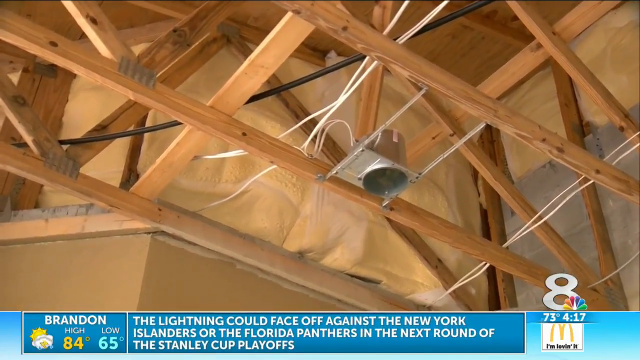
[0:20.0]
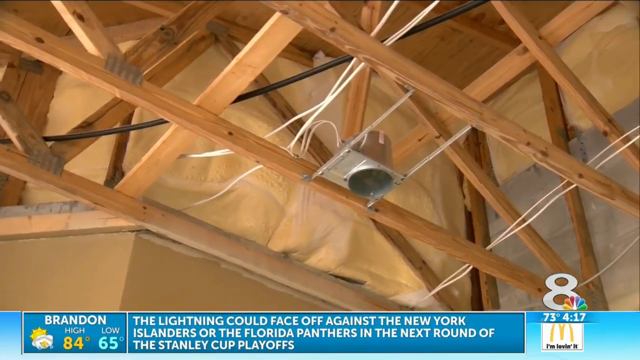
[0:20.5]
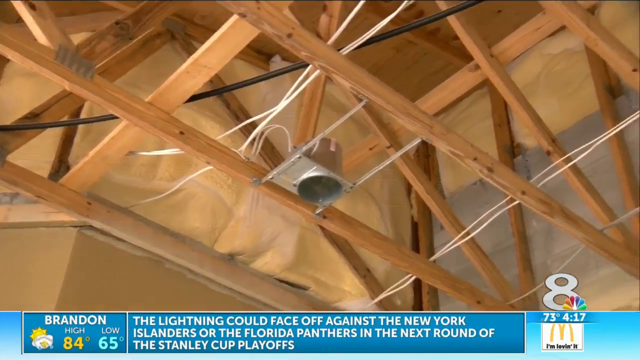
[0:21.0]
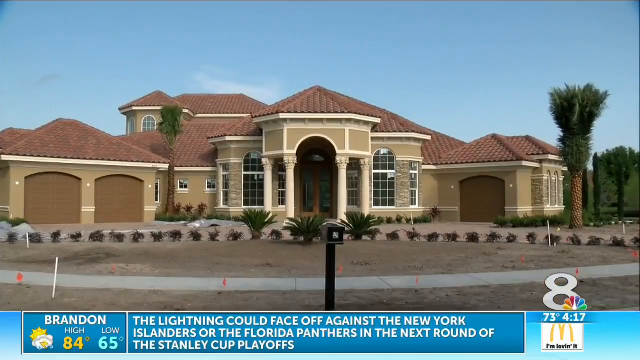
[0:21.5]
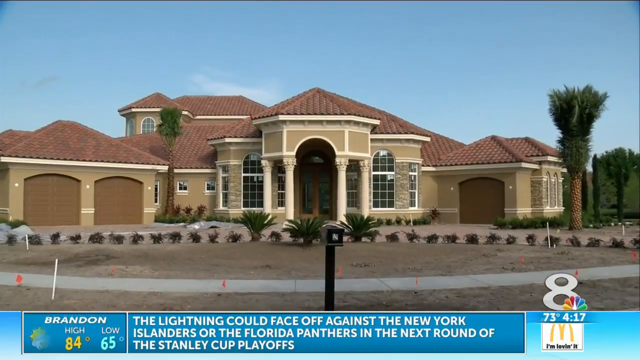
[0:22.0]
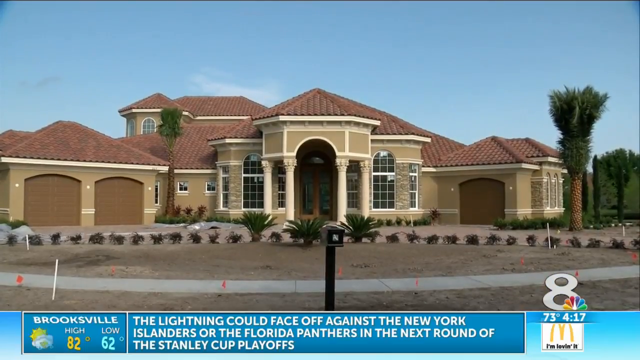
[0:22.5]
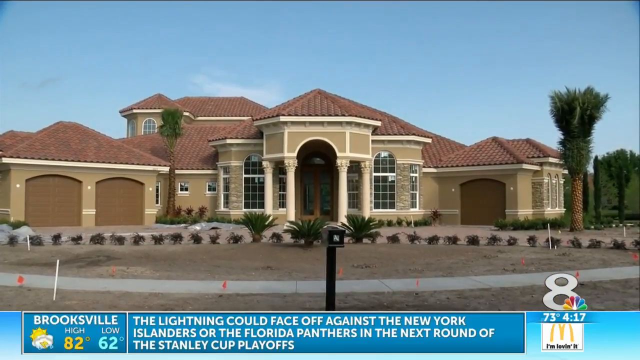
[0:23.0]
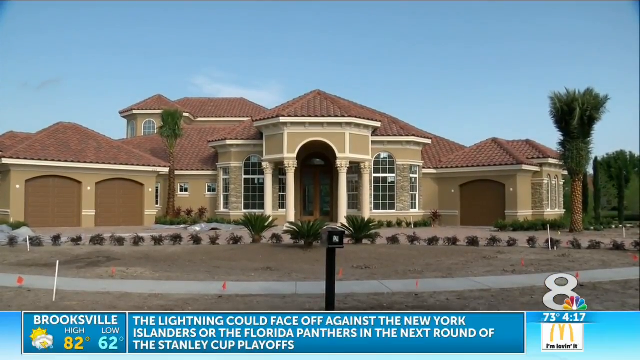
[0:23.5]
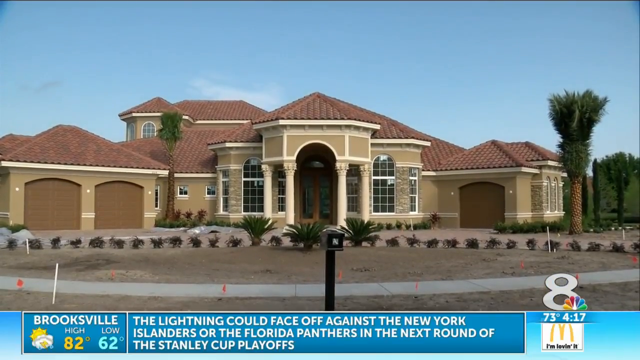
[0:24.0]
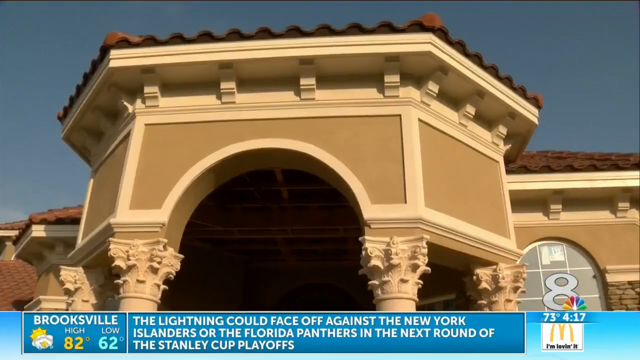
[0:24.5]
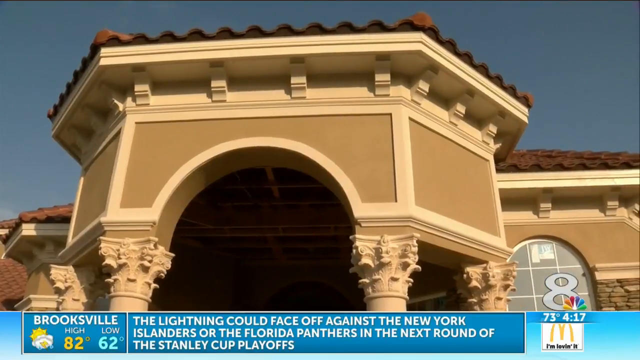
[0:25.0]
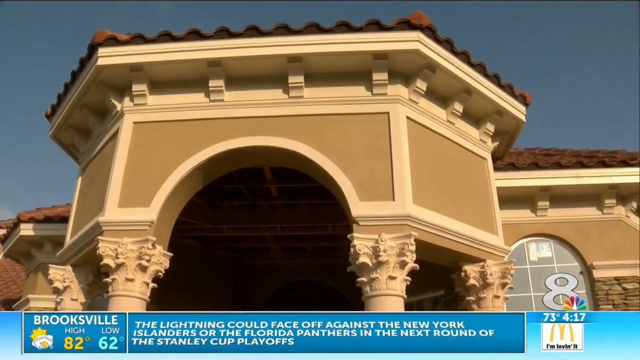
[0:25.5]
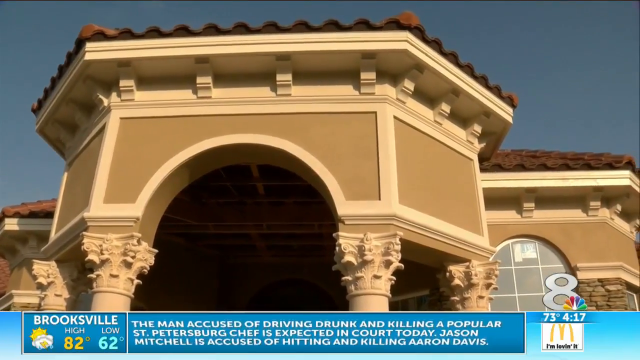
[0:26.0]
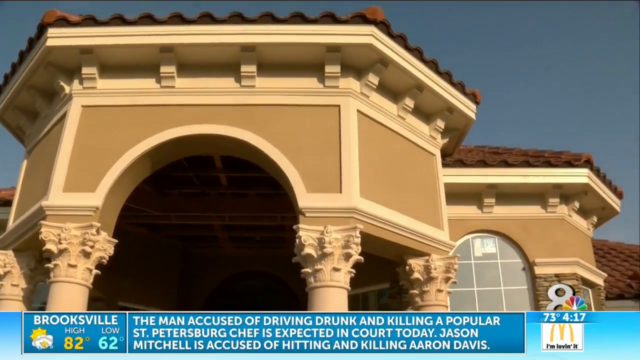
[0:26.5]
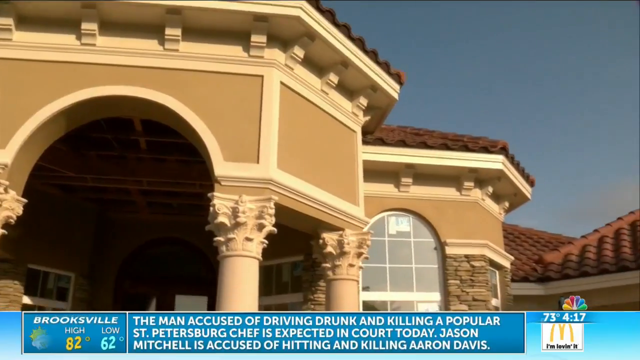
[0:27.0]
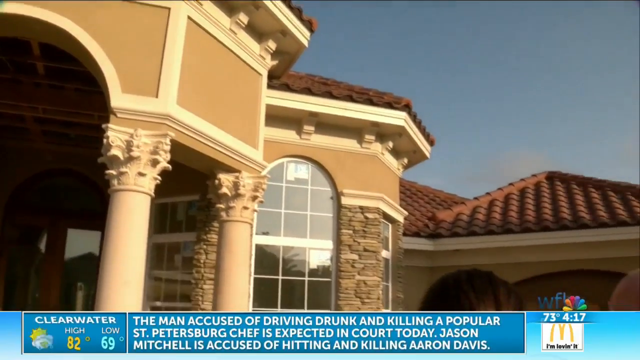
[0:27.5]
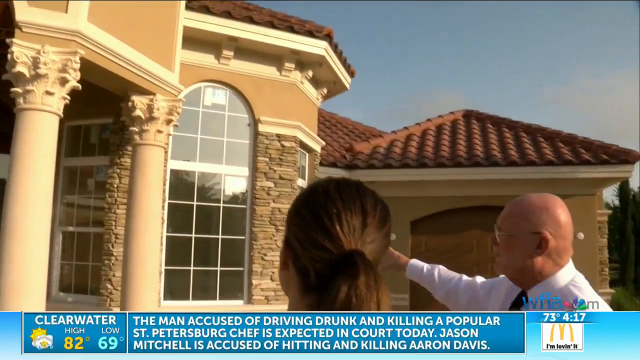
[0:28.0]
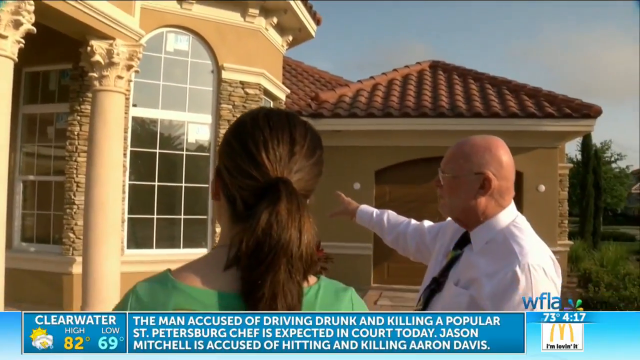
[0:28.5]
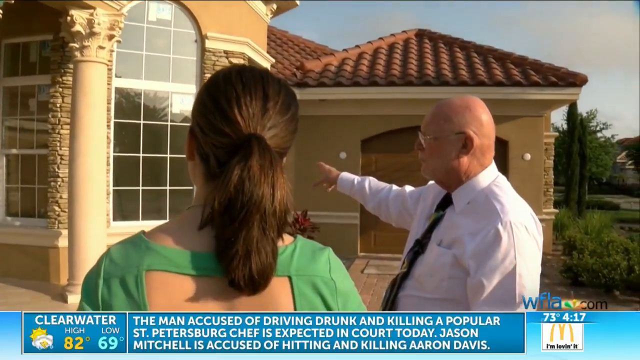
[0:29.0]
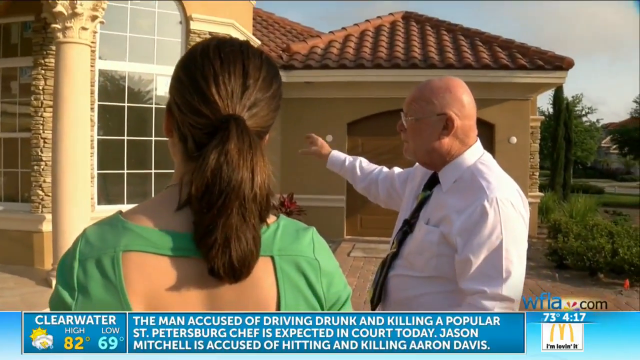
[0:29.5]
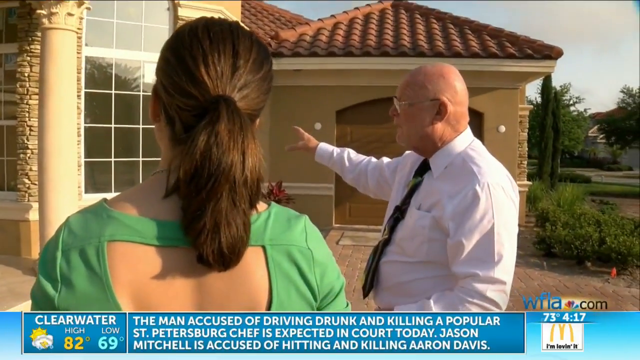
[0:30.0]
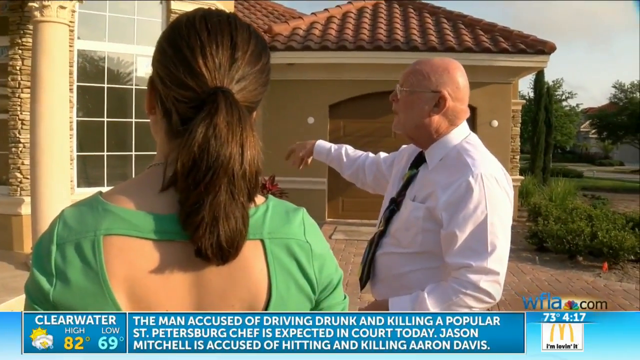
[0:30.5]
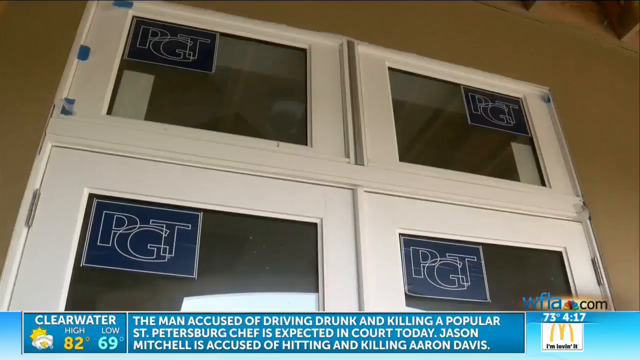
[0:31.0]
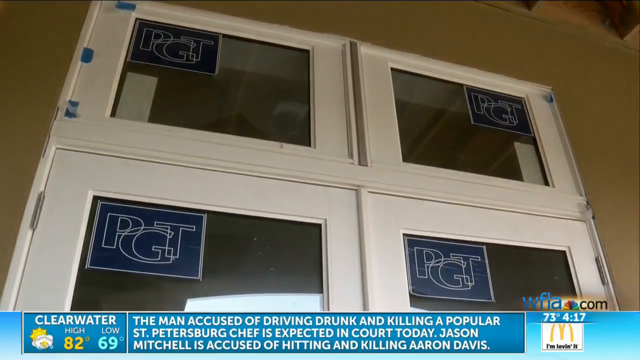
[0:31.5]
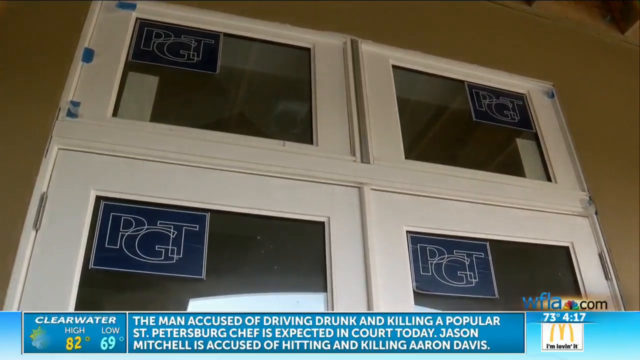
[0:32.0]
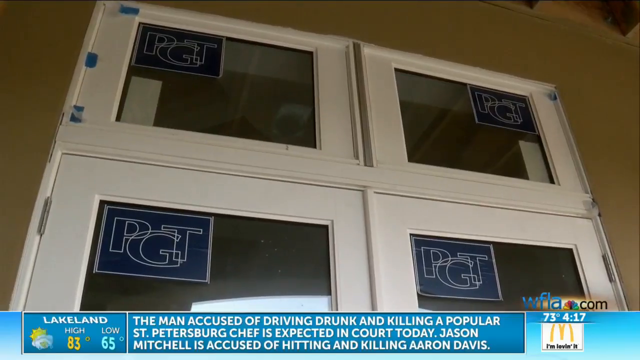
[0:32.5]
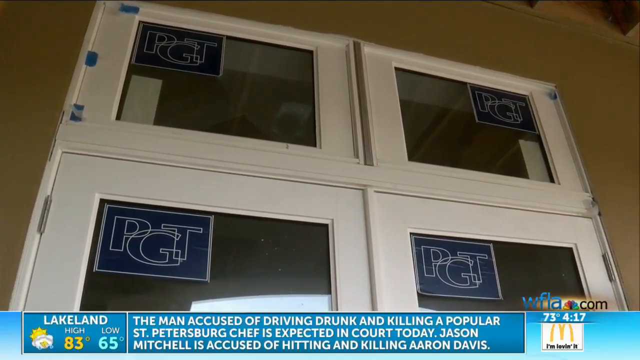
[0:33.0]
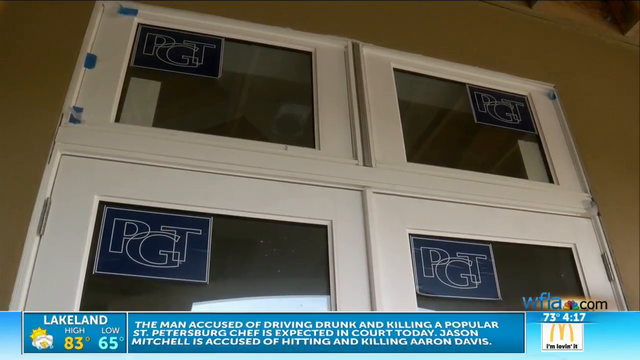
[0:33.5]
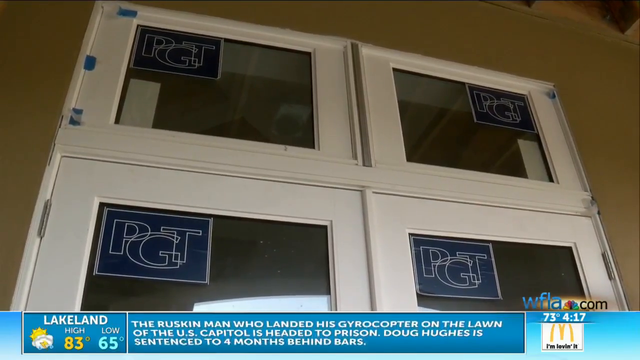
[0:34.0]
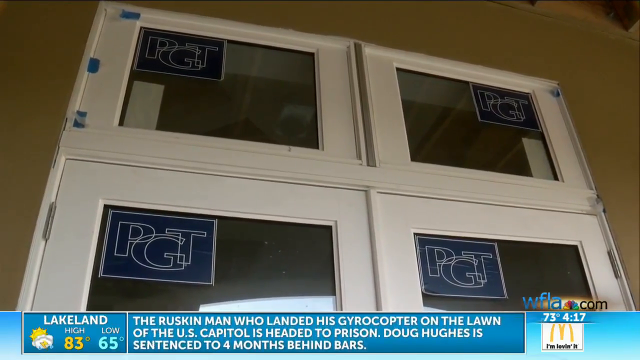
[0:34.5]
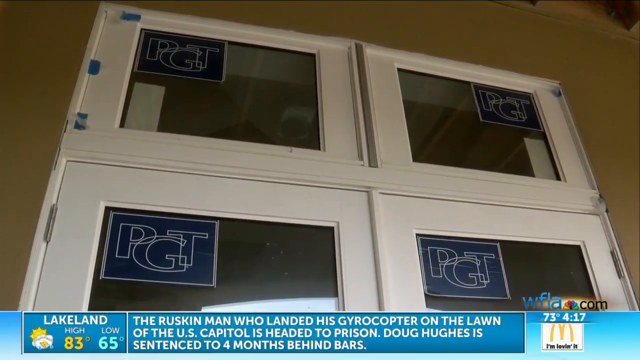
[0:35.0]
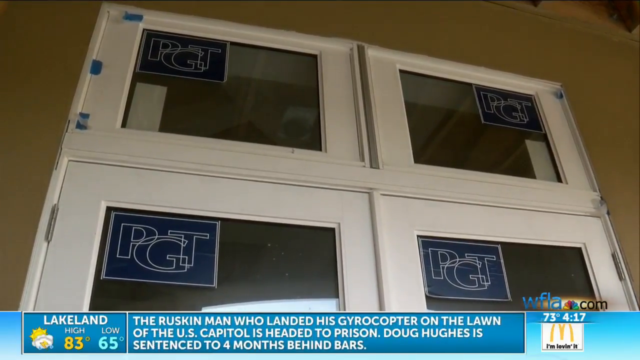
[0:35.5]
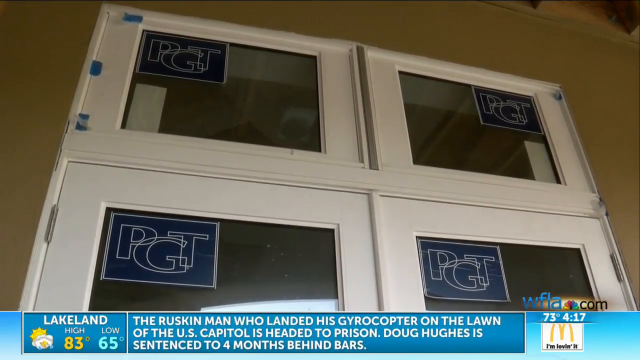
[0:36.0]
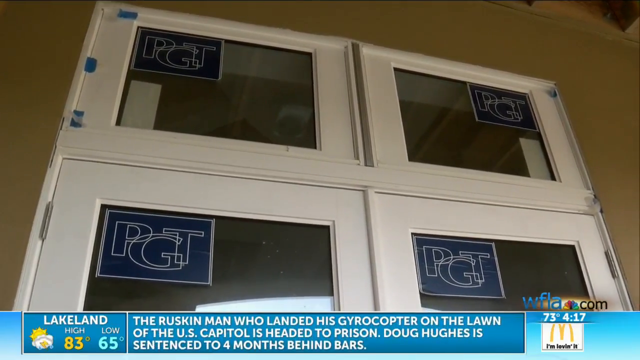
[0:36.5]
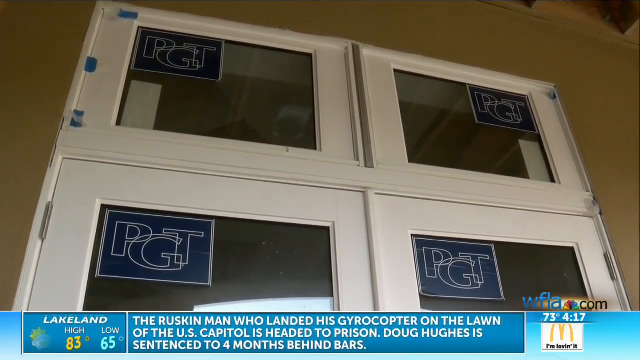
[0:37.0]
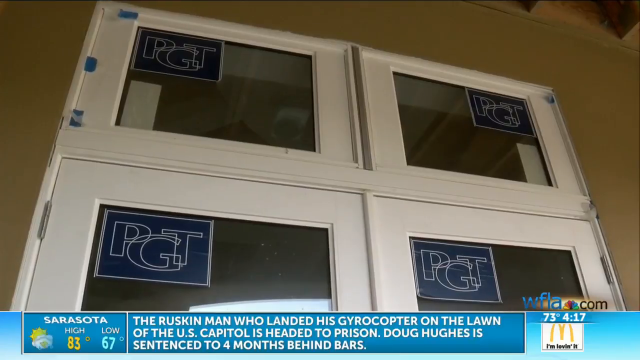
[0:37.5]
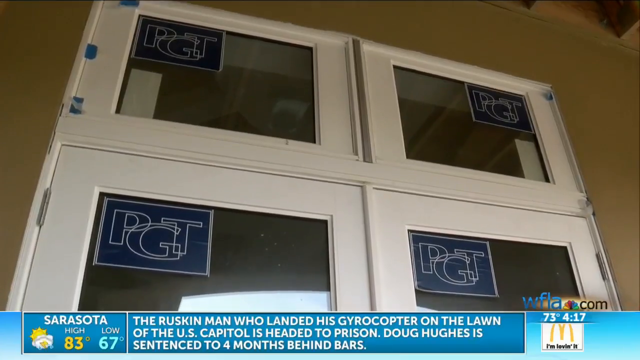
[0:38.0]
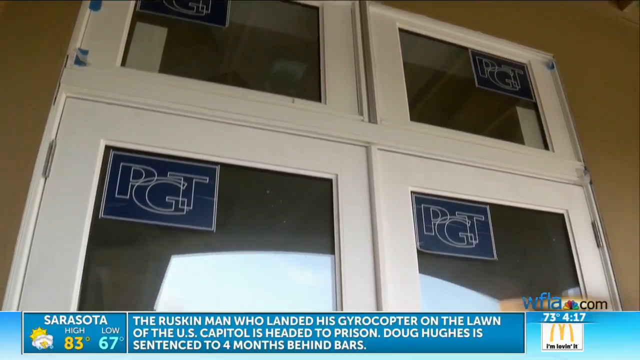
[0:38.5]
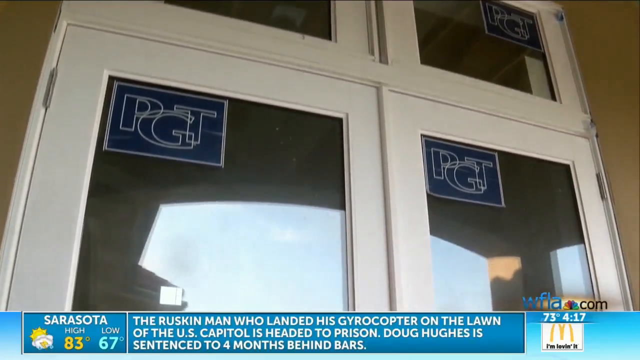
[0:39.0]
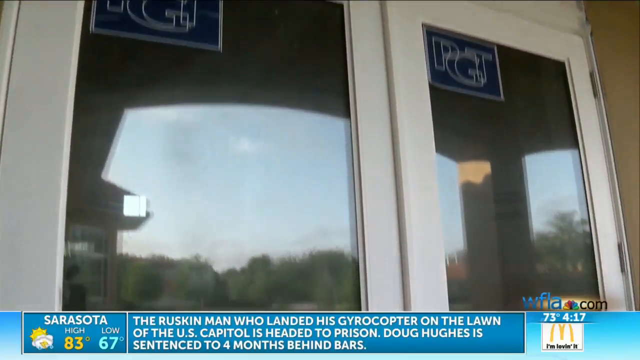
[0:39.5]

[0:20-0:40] More of the inside of a building is shown, looking directly up at the roof, where the bare skeleton of the top of the roof is visible, with pieces somewhat like banisters. Next comes the outside of the building, which has a big burgundy or maroon roof. It looks like a very big mansion-type place with multiple rooms, and almost looks like a nursing home. Two people talk with each other: a woman on the left in a green dress that reveals some of the middle of her back, and an older man with a bald head and a white vest. The camera is then zoomed in closely on what appear to be four mirrors bearing a logo for PGT.